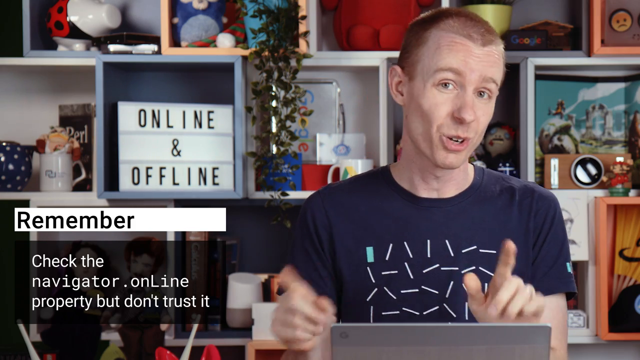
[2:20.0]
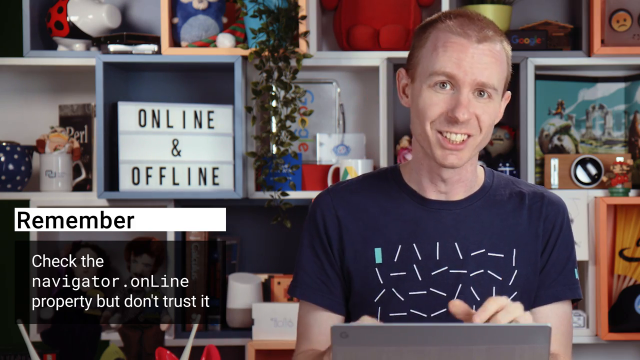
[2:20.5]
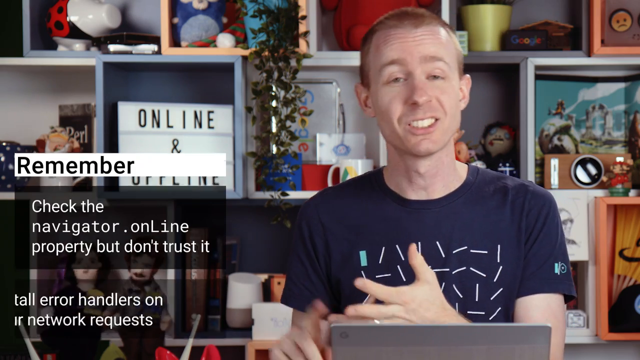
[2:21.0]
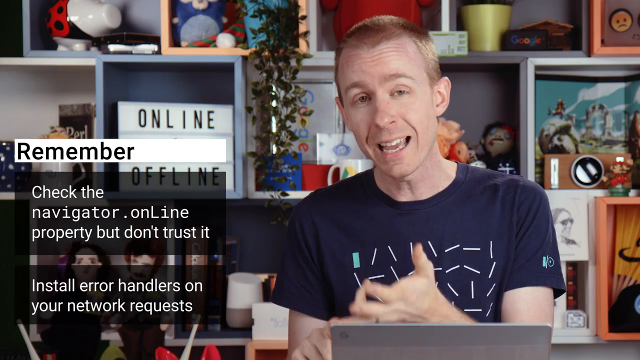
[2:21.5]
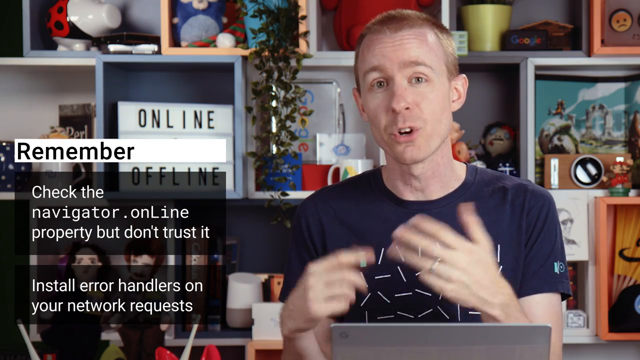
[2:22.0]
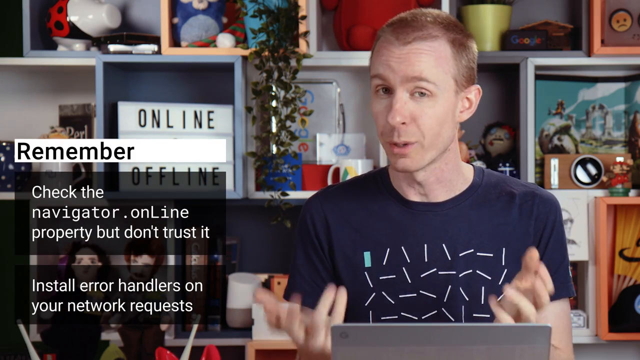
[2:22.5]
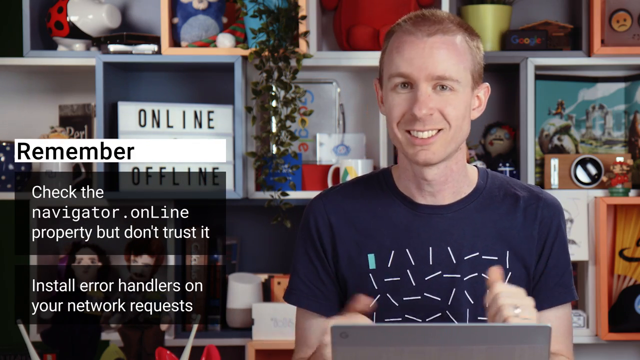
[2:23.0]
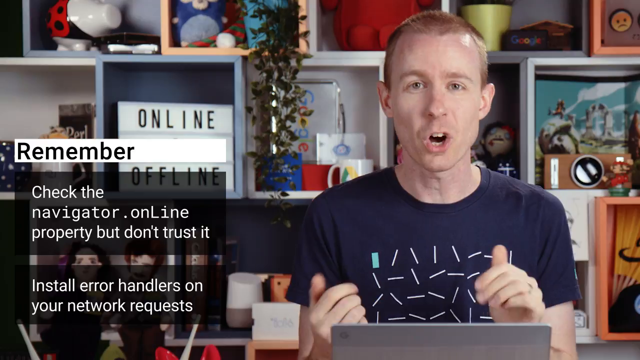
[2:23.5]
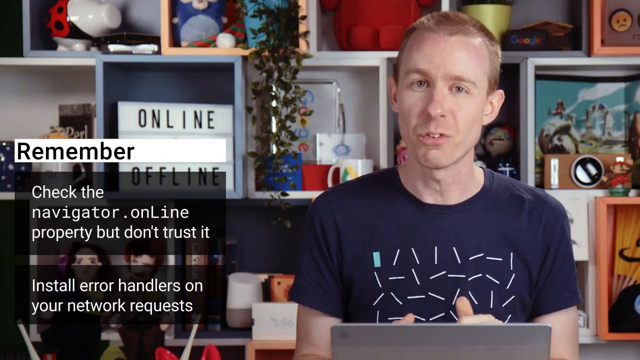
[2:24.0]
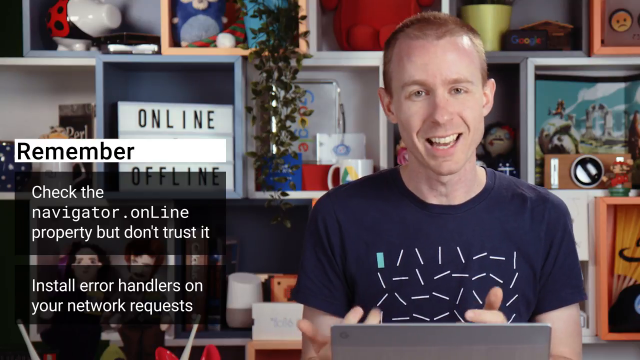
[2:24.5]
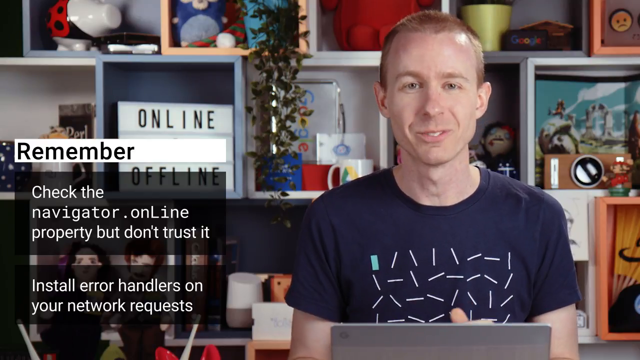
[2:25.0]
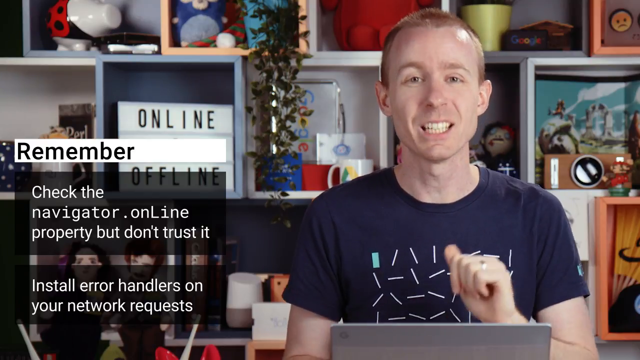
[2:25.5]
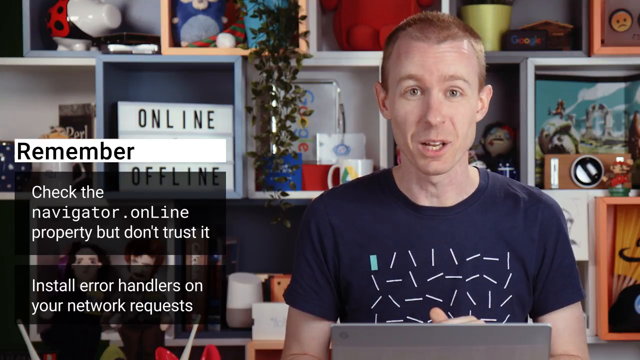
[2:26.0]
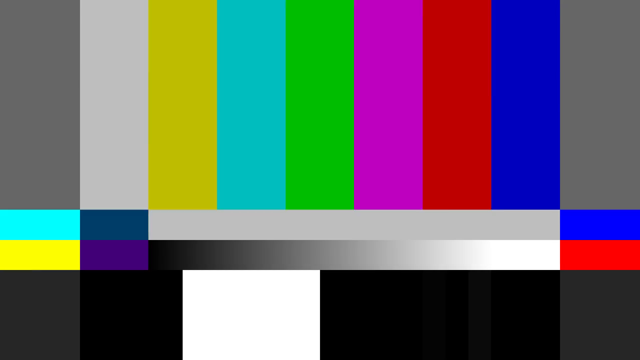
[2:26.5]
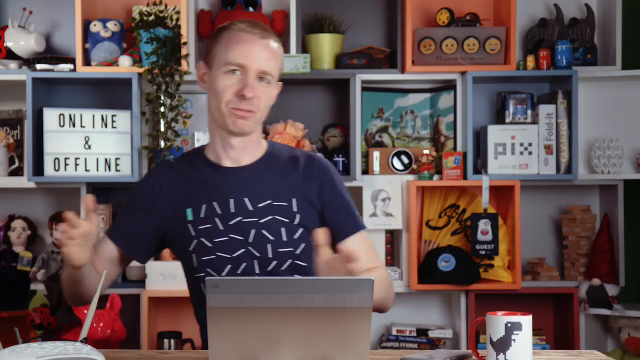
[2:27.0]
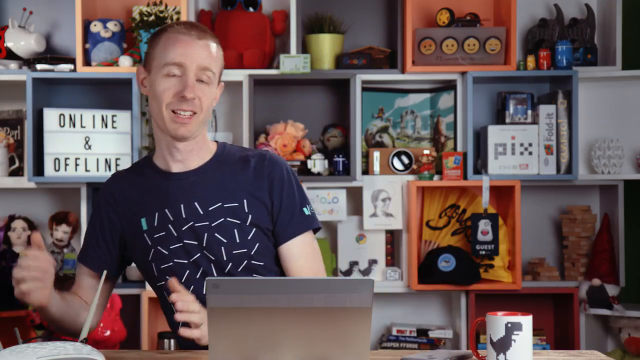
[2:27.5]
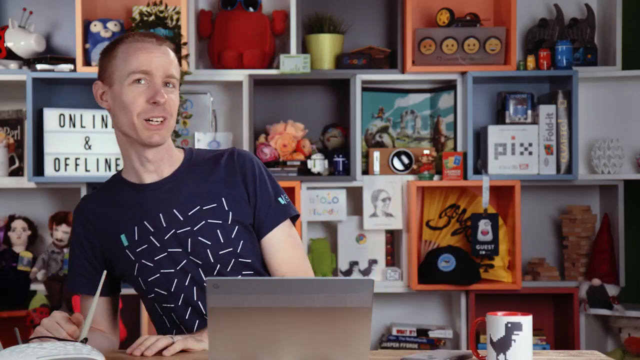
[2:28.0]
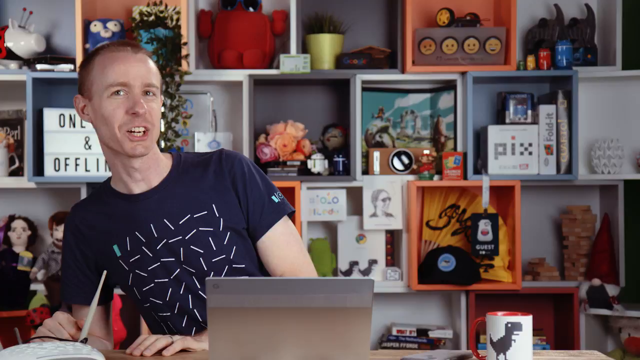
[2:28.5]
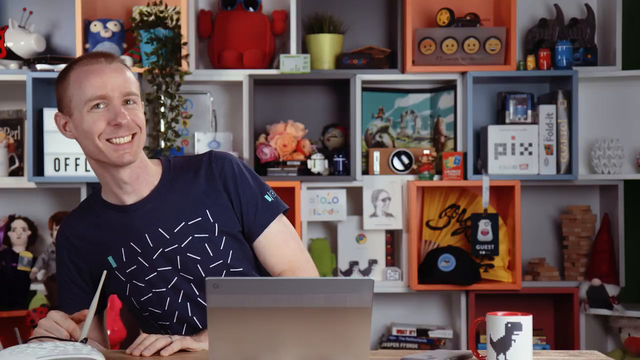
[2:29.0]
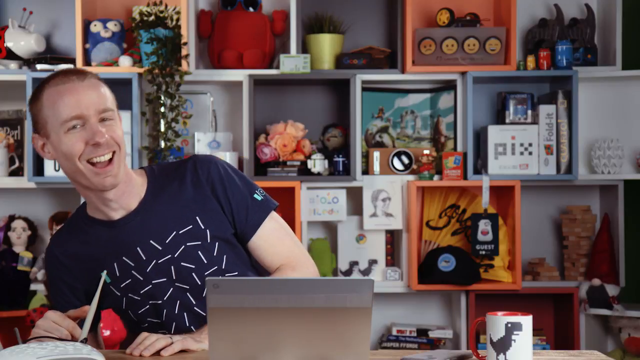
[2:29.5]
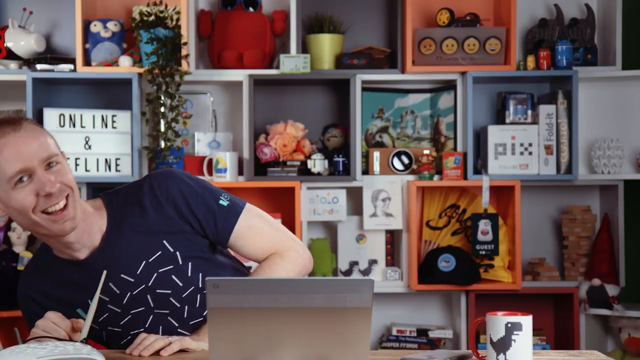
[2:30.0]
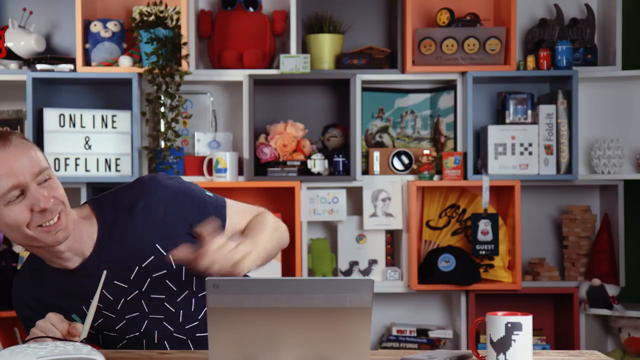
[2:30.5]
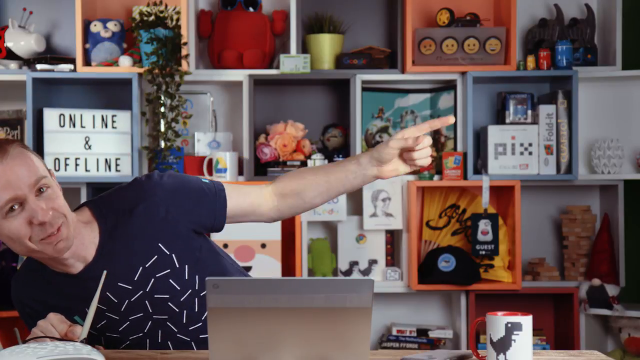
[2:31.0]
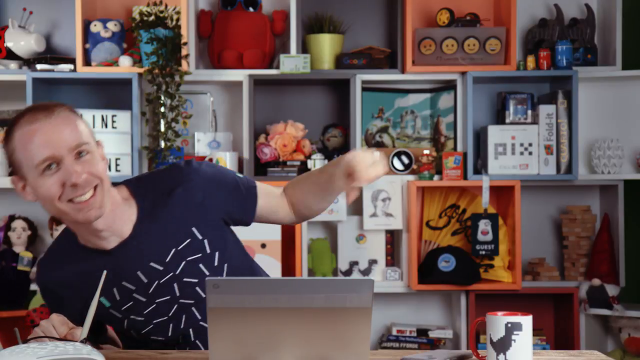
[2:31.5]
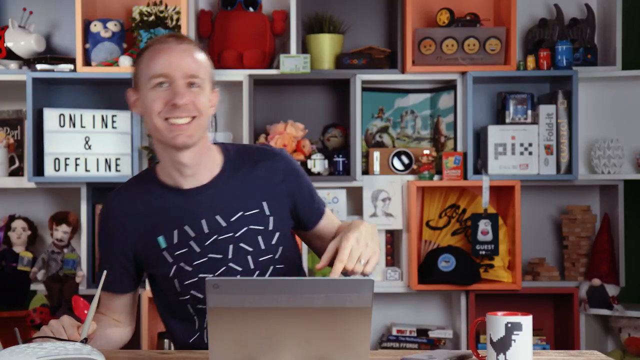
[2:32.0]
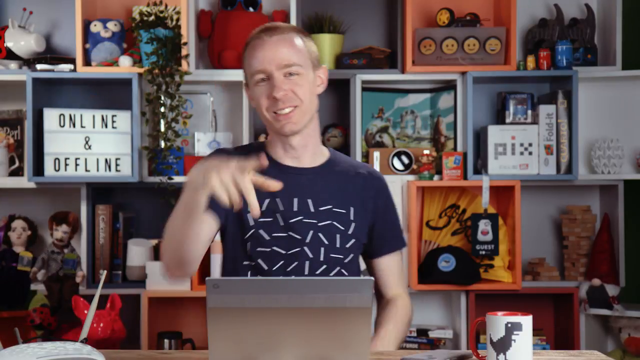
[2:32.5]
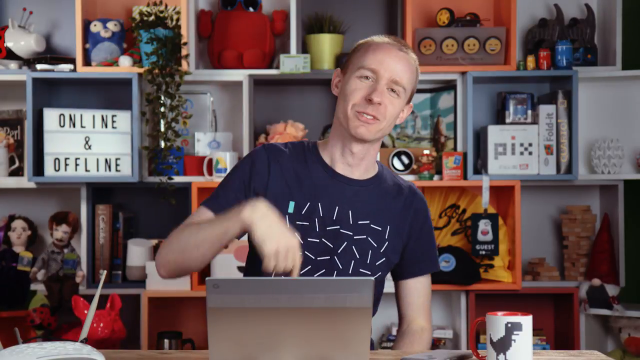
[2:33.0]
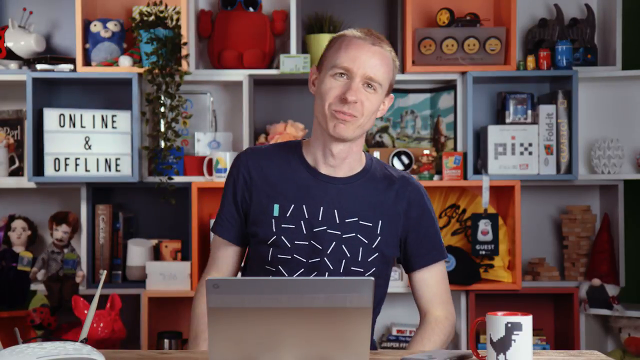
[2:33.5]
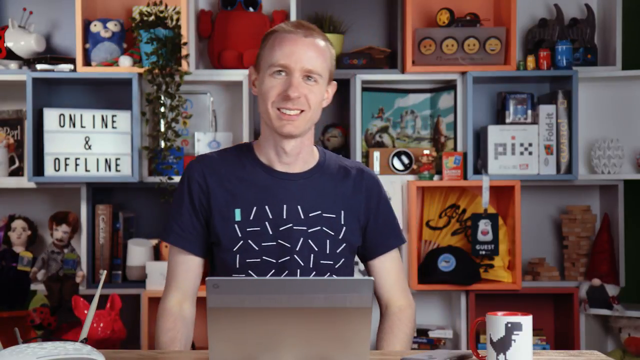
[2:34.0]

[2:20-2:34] New text appears in the bottom left corner: "install error handlers on their network requests," while the man on the right keeps talking to the camera and making hand motions. He is smiling as he talks. He slides his hands from the right side of the screen over to the left. He looks back up at the camera from an awkward angle, moves his head down toward the left side of the screen, and points toward the right side, his body leaning toward the left while his left hand points to the right. He sits back upright, points at the camera again, and the video ends.